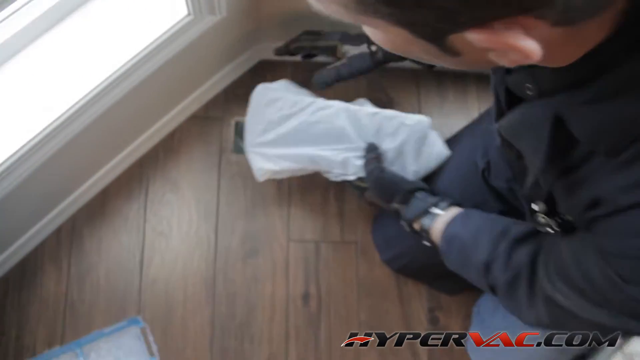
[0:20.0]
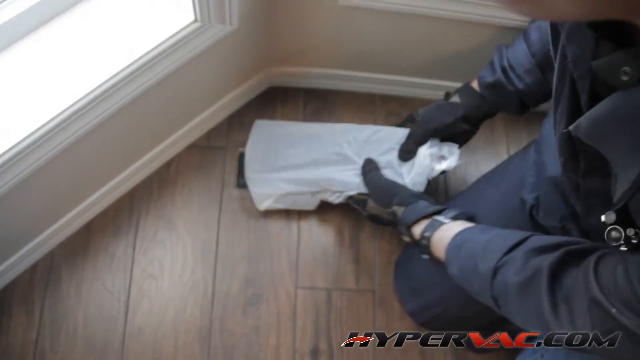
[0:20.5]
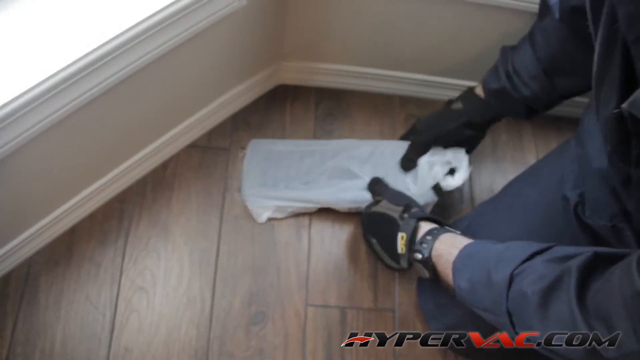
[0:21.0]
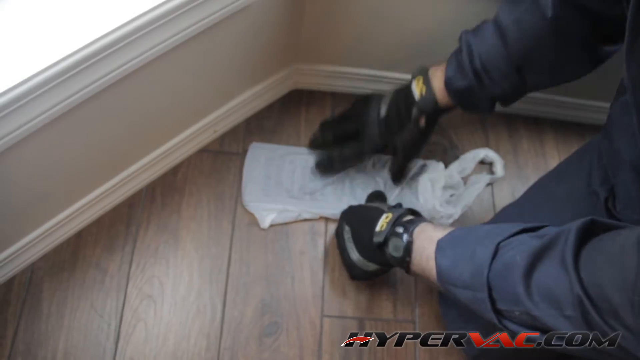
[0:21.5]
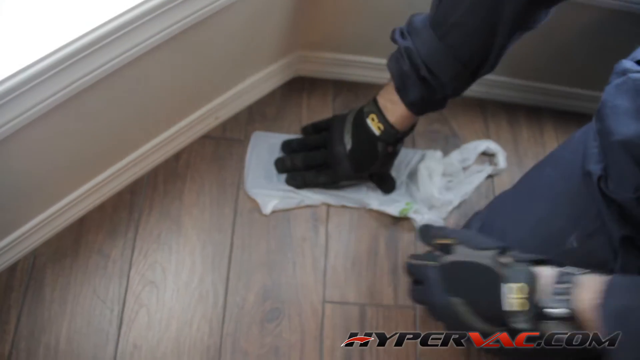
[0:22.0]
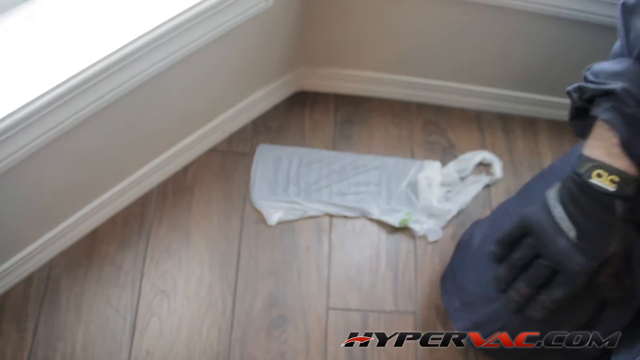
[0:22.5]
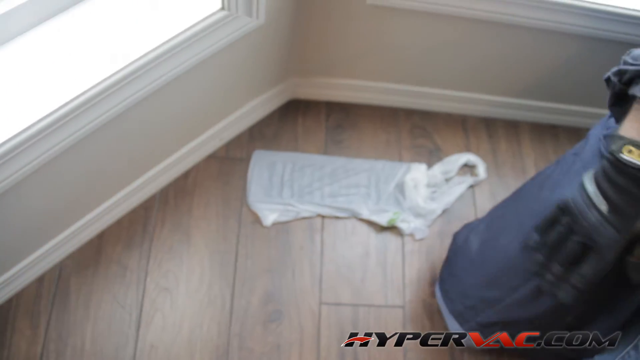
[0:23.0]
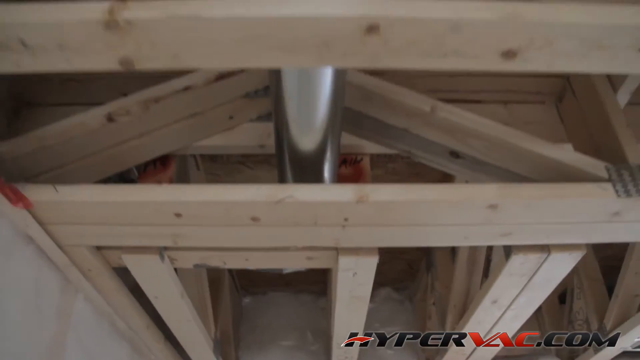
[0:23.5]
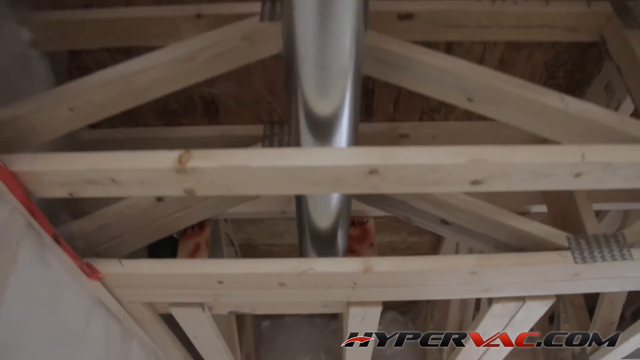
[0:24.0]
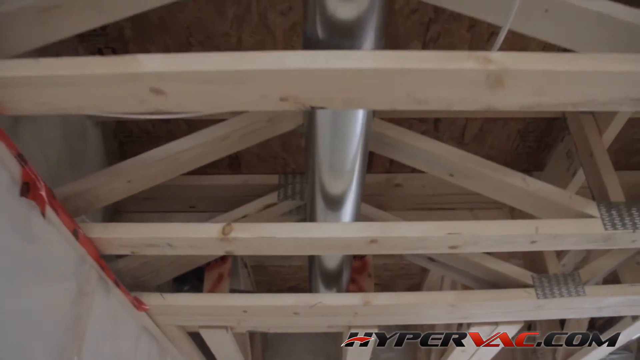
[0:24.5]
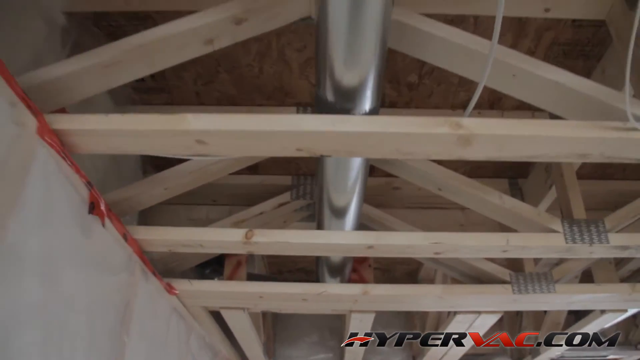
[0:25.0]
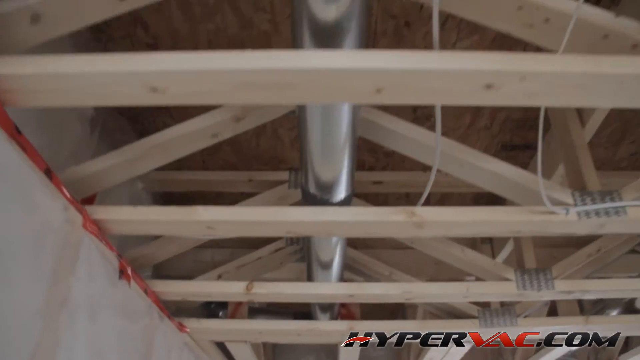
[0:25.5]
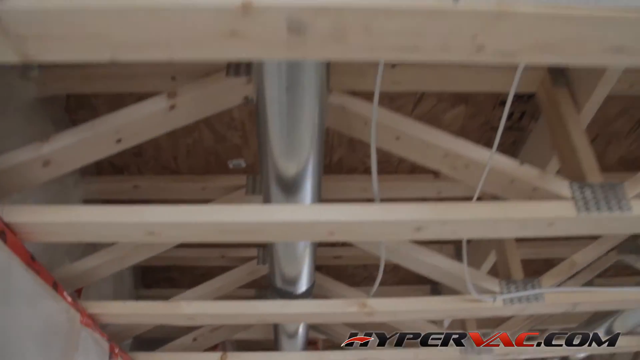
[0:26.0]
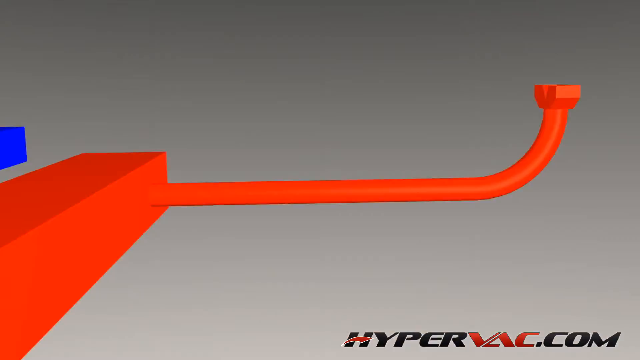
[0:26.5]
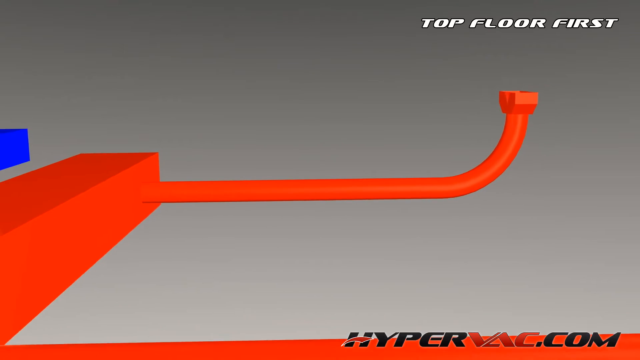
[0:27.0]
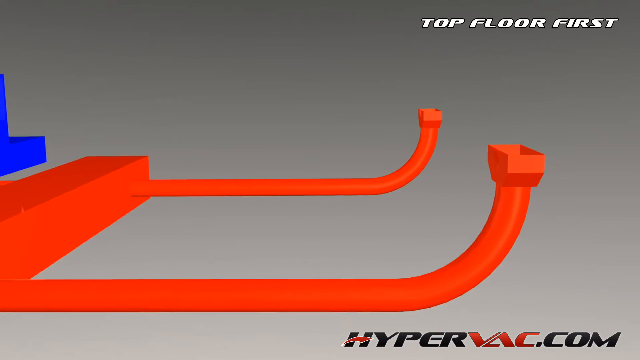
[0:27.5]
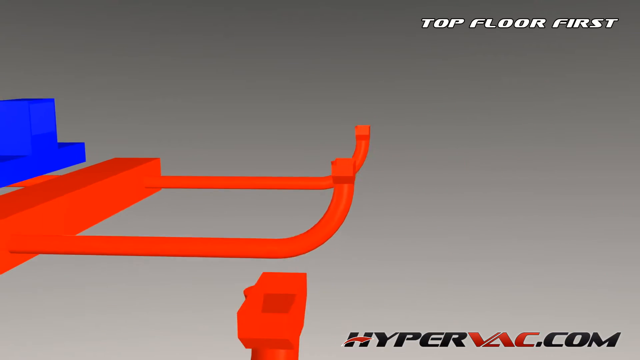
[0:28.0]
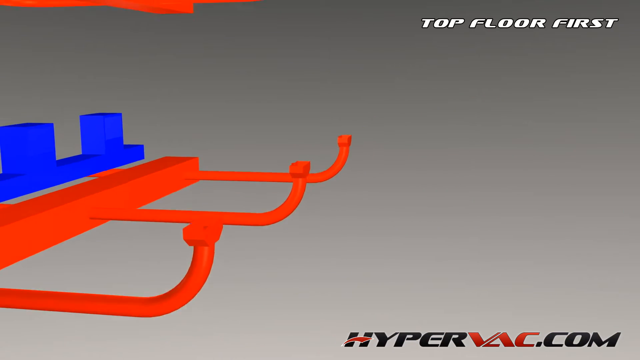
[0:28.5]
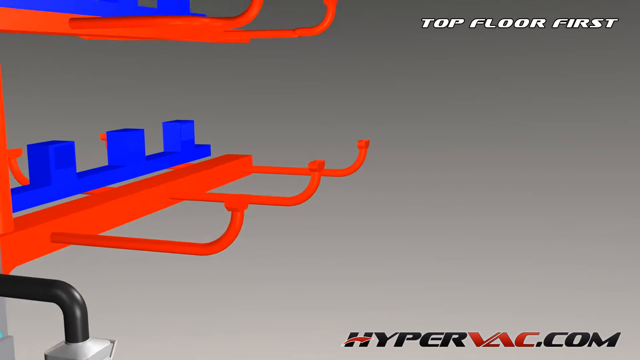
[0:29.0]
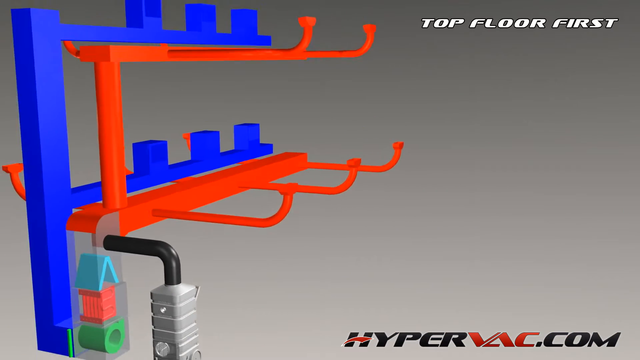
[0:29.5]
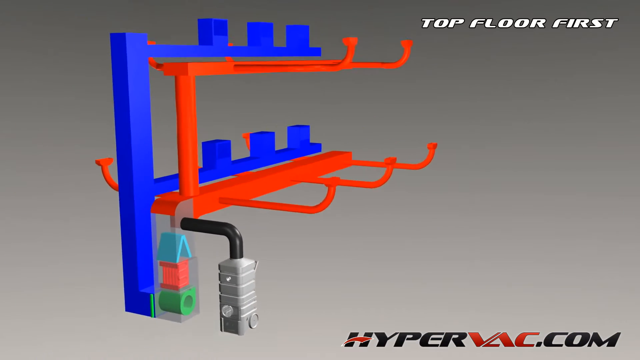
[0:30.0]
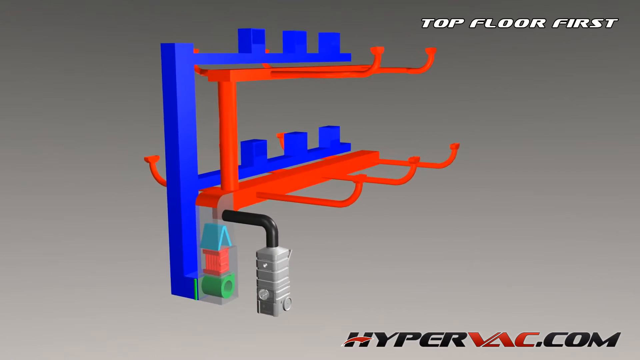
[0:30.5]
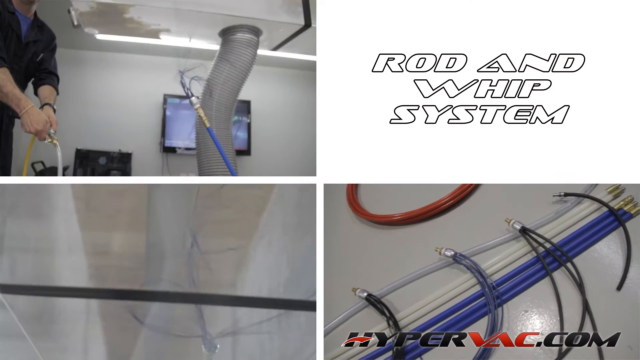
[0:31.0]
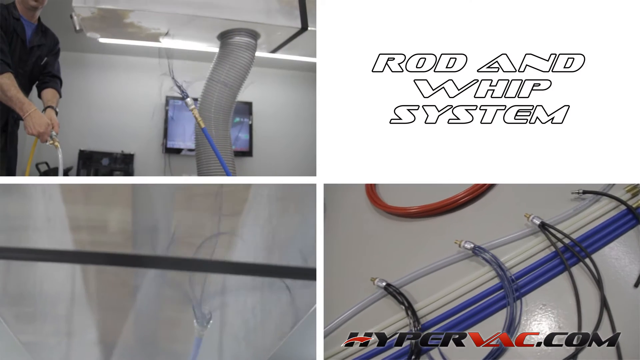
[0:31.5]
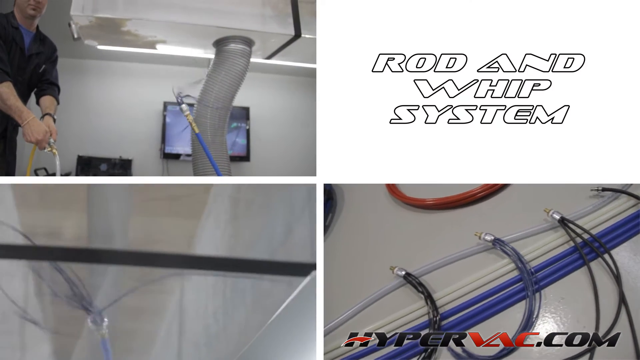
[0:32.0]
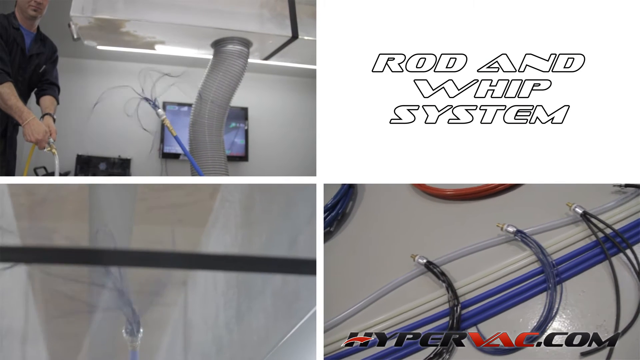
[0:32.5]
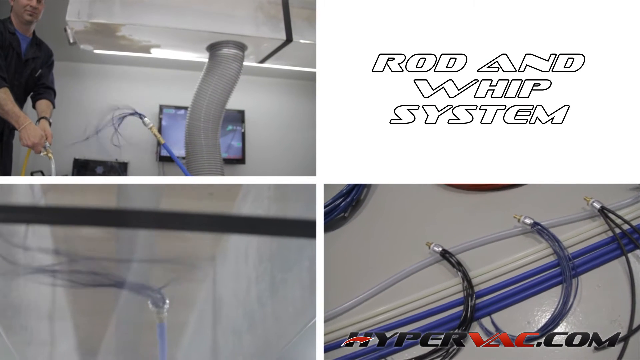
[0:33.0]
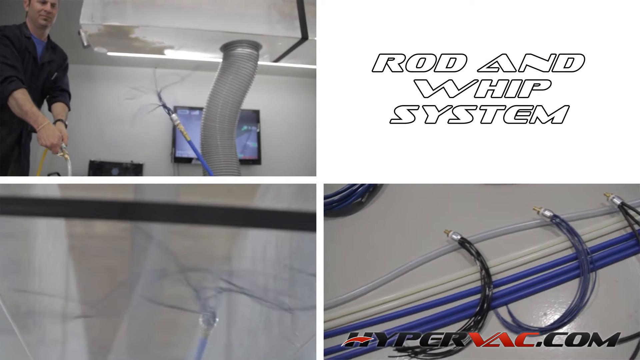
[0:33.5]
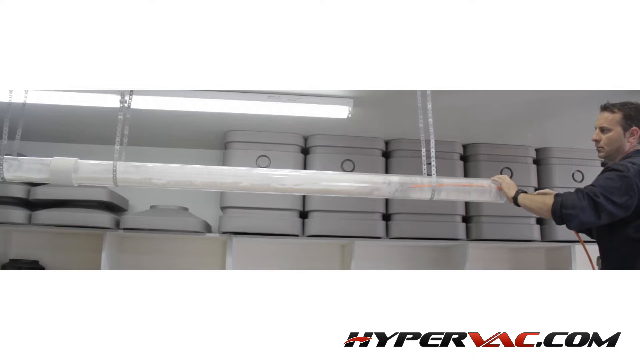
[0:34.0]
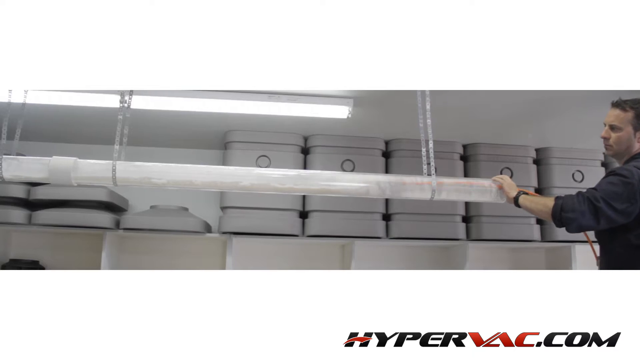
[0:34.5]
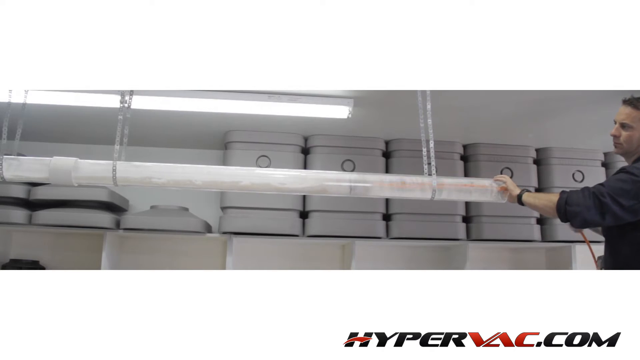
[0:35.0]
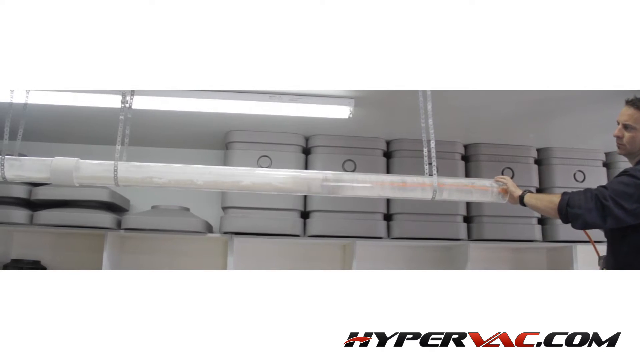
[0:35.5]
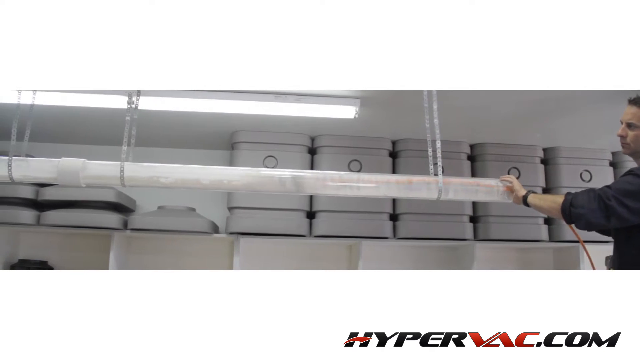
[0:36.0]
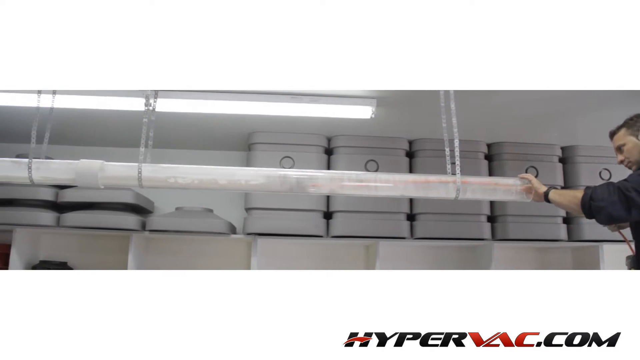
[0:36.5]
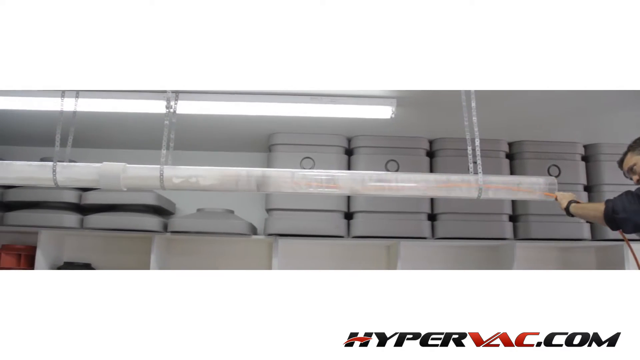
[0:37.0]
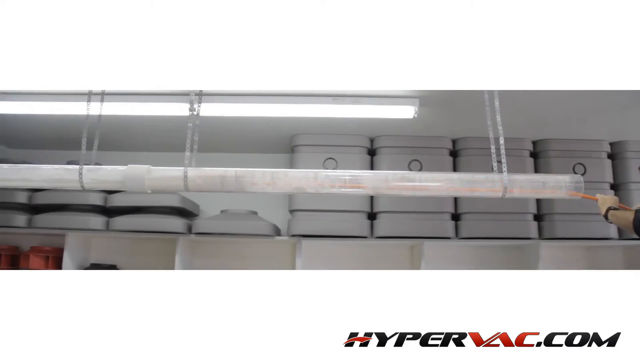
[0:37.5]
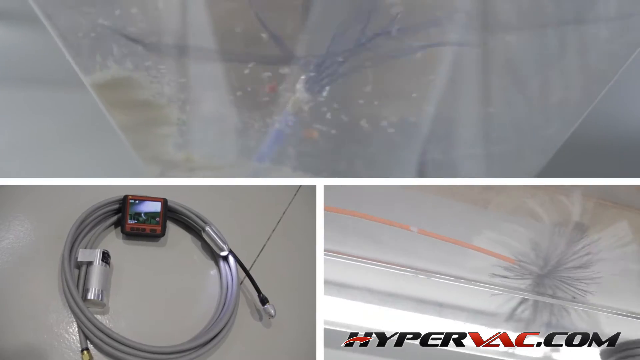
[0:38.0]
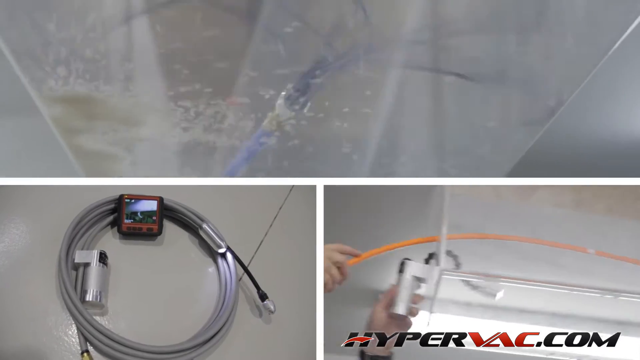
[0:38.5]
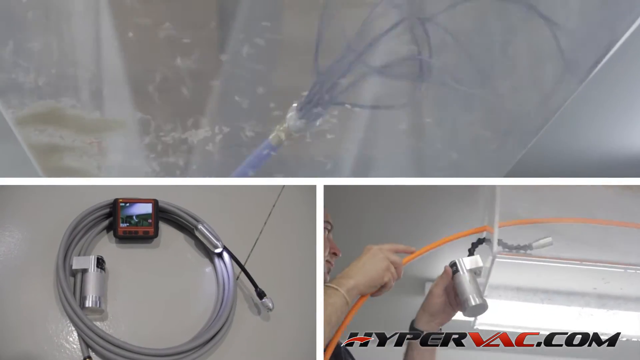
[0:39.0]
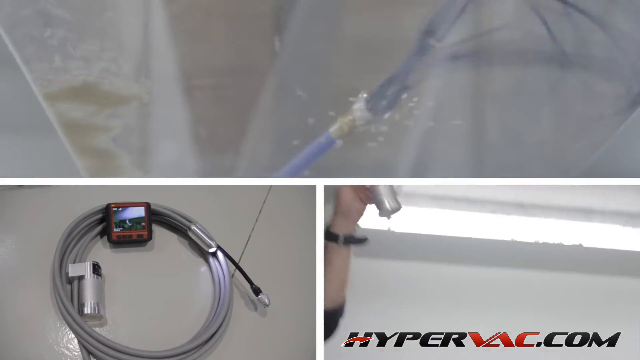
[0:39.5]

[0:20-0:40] A man in a black outfit and black gloves works inside a house, placing something on top of a vent located on the ground. The camera cuts to what looks like a ceiling area, where a large silver pipe runs throughout the house with wooden planks around it. An animation follows, showing a green bottom and a blue and red top area with branches reaching to the top; "top floor" appears on the top right across four different images playing consecutively. The video then cuts to a man standing in front of a large tube, cleaning it out by putting something inside it. Next, a screen of three different shots appears; the shot on the top left shows a wiry type of thing moving around.